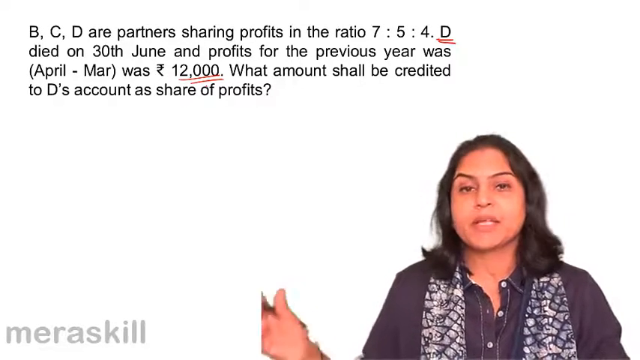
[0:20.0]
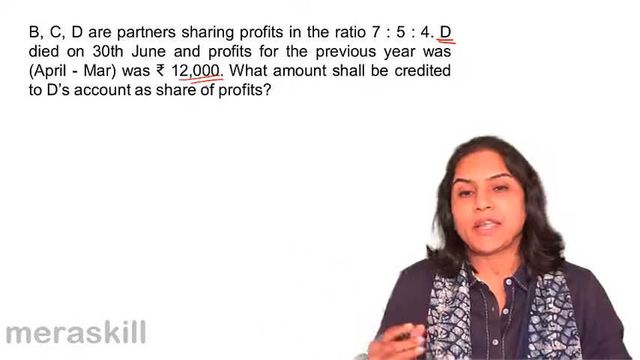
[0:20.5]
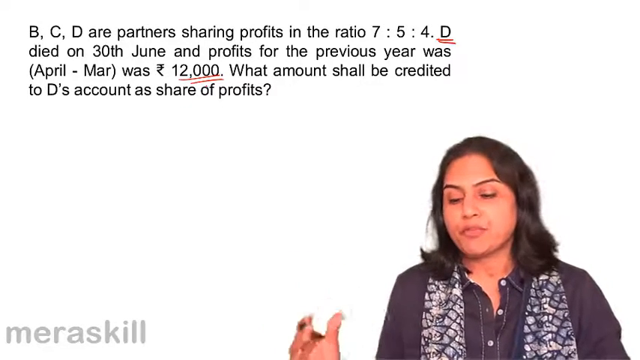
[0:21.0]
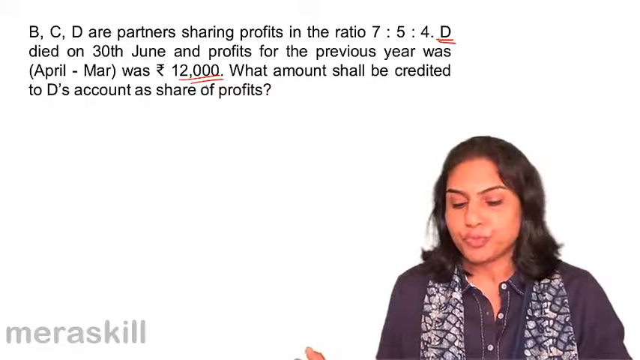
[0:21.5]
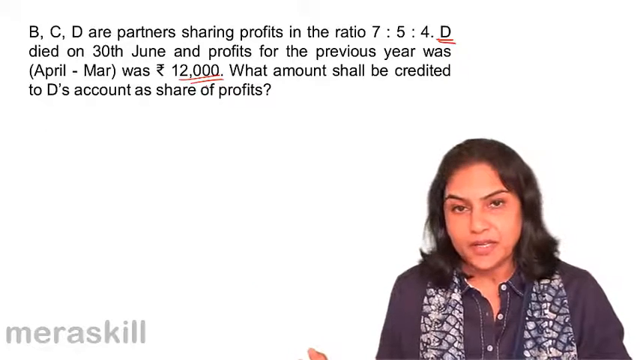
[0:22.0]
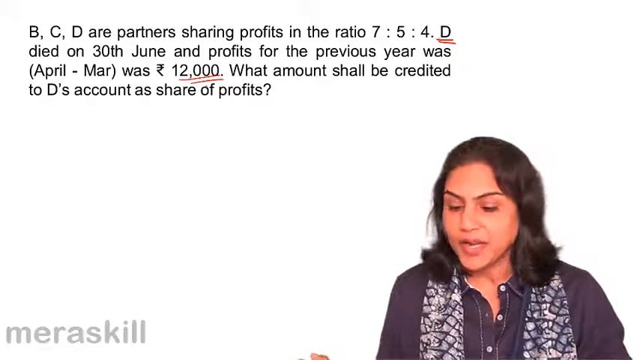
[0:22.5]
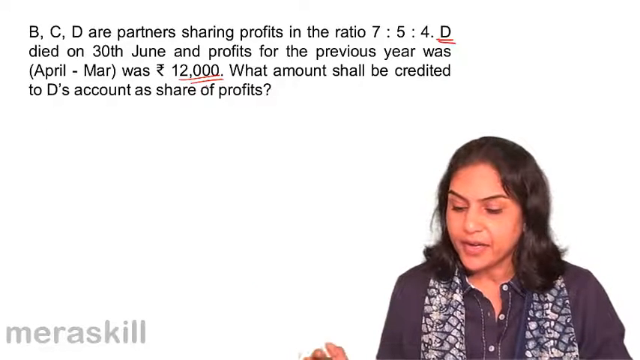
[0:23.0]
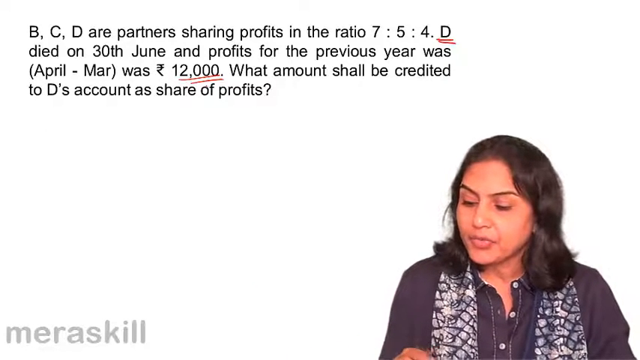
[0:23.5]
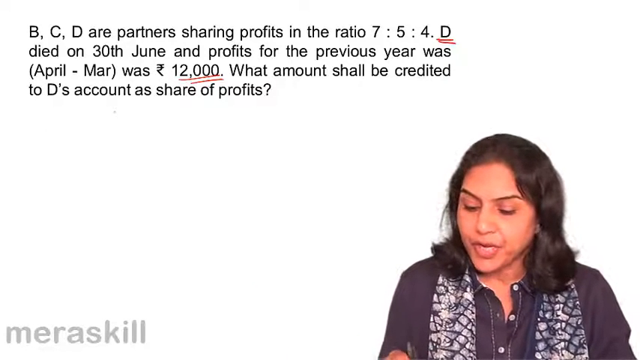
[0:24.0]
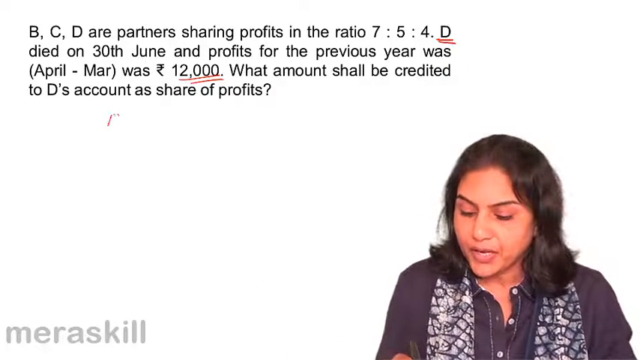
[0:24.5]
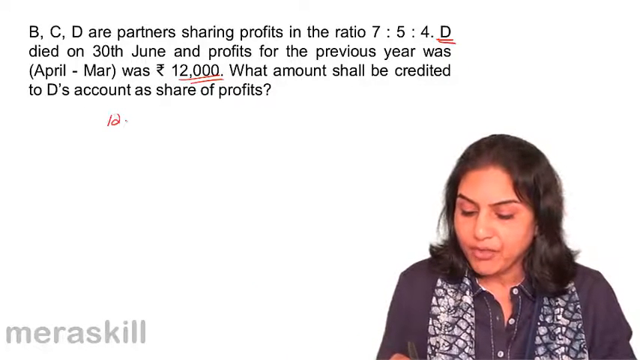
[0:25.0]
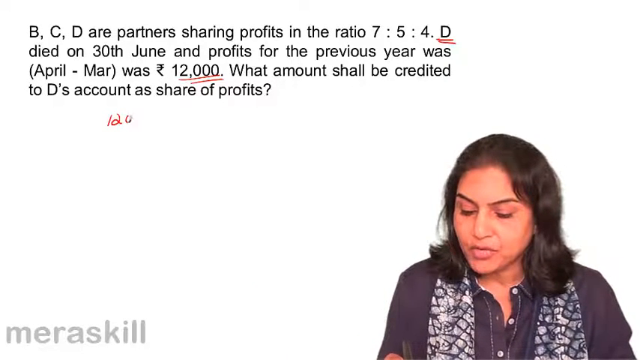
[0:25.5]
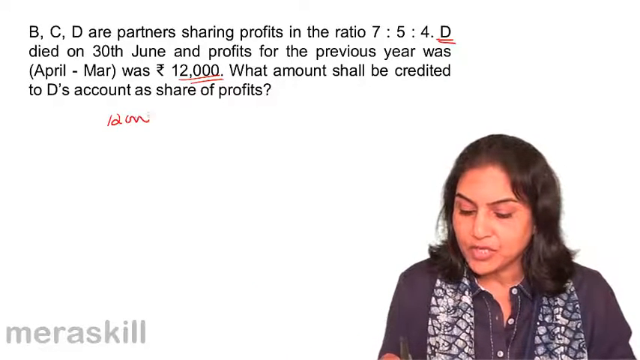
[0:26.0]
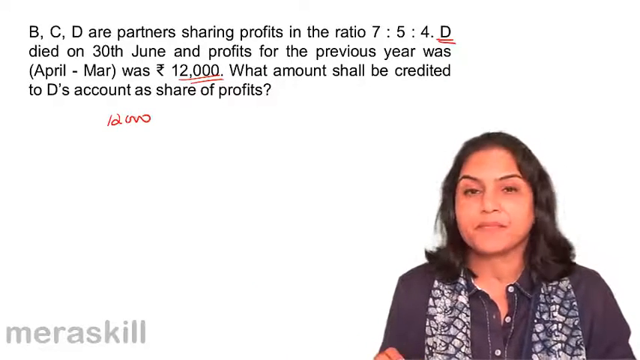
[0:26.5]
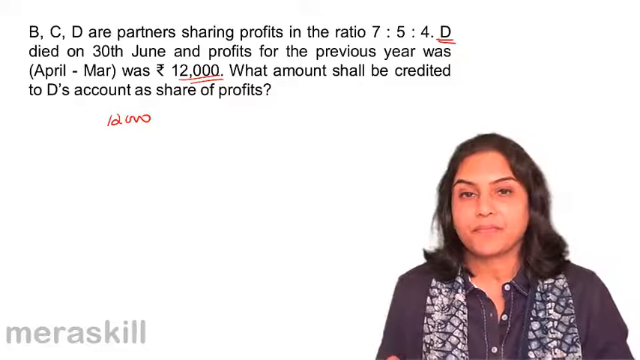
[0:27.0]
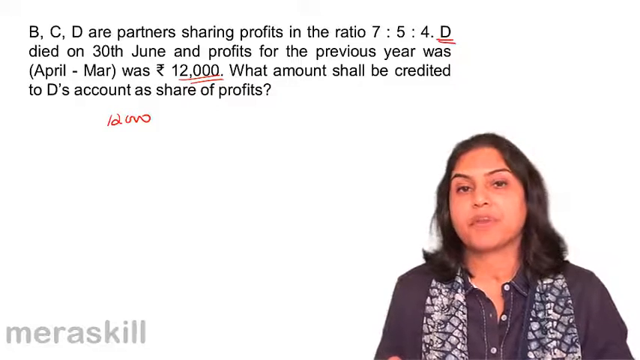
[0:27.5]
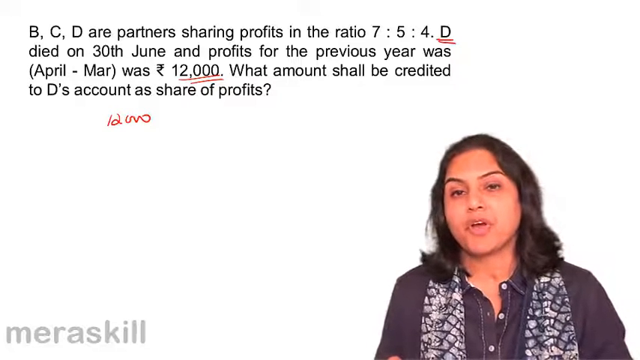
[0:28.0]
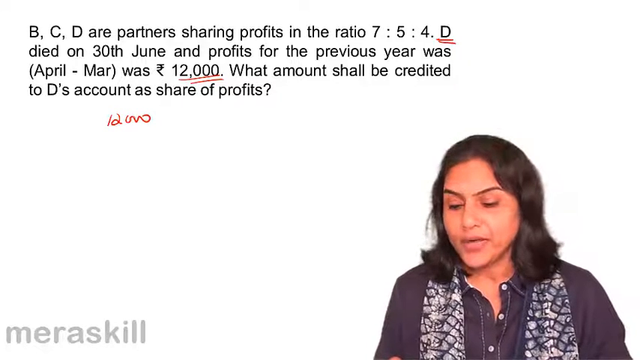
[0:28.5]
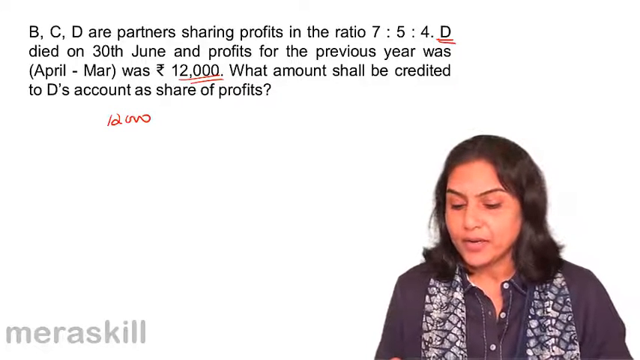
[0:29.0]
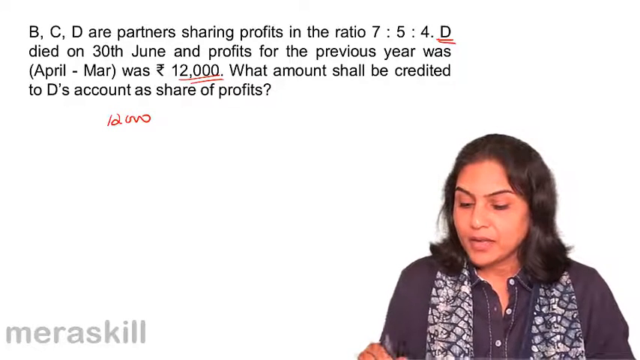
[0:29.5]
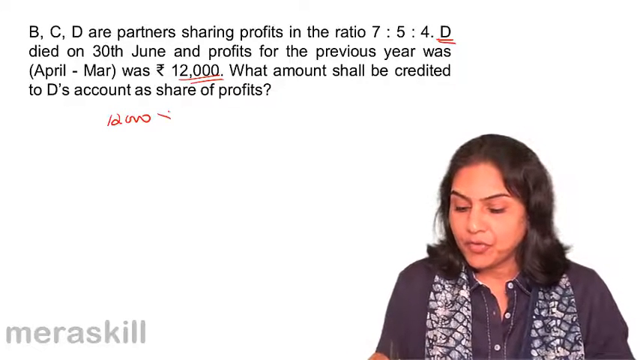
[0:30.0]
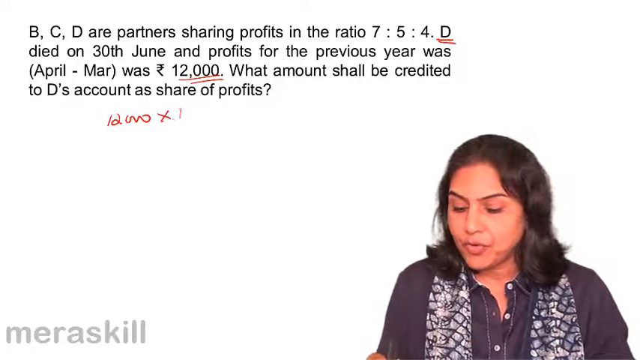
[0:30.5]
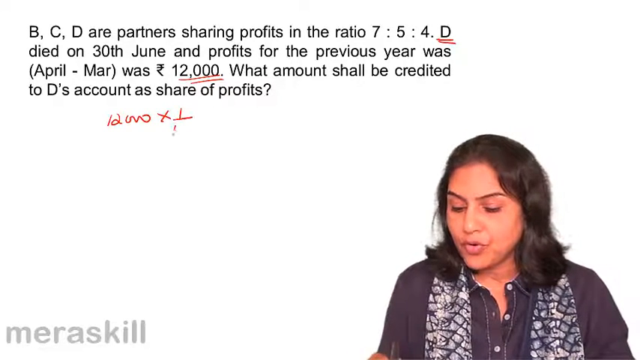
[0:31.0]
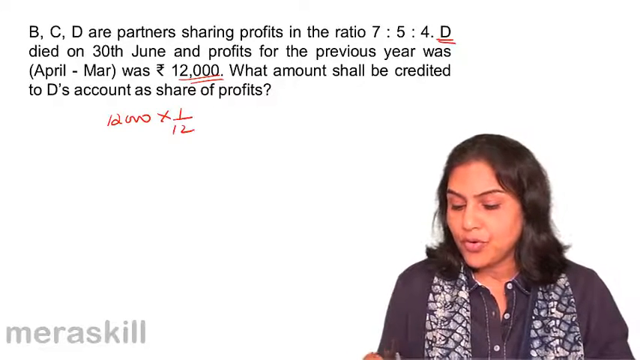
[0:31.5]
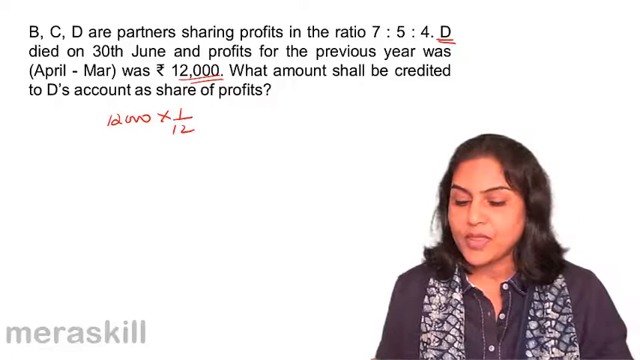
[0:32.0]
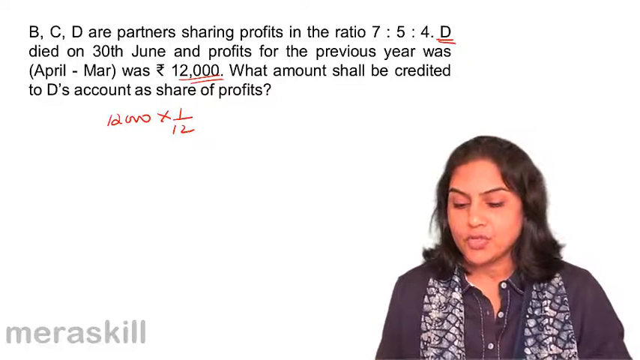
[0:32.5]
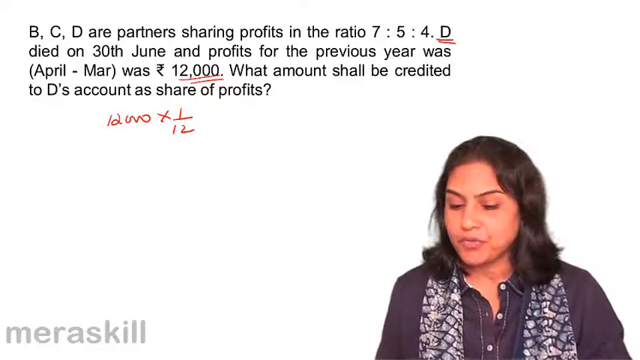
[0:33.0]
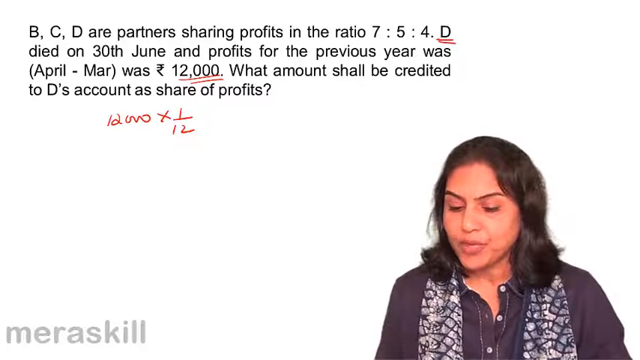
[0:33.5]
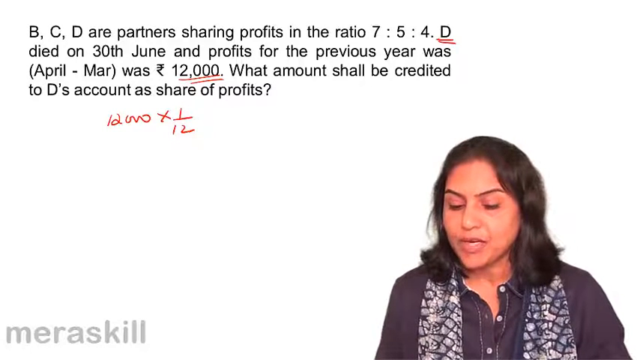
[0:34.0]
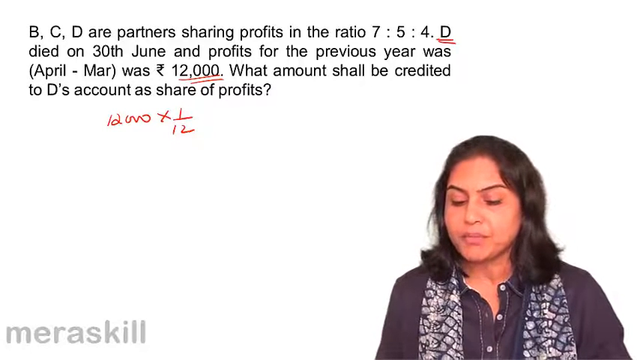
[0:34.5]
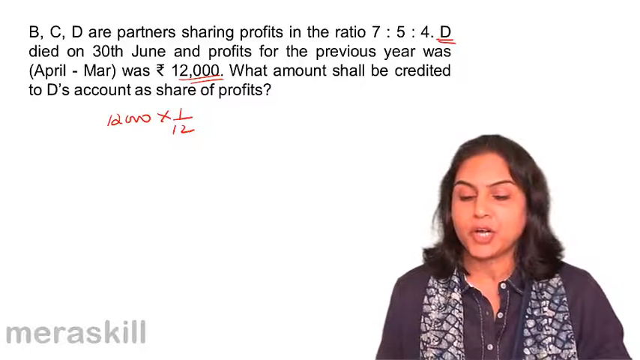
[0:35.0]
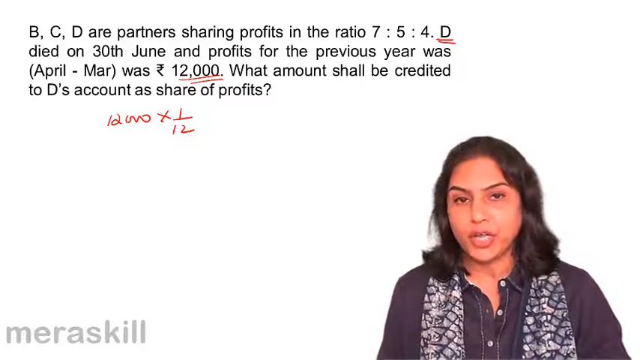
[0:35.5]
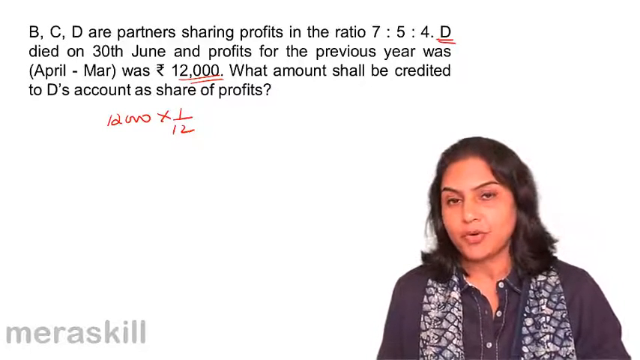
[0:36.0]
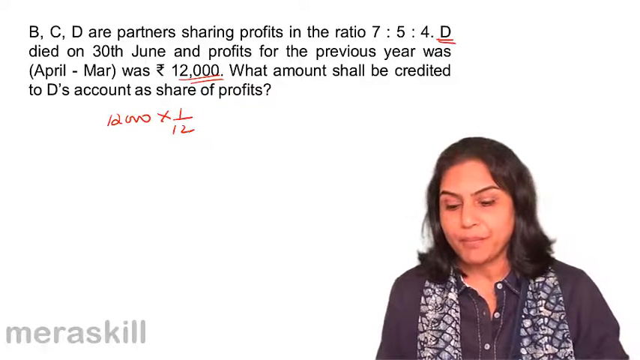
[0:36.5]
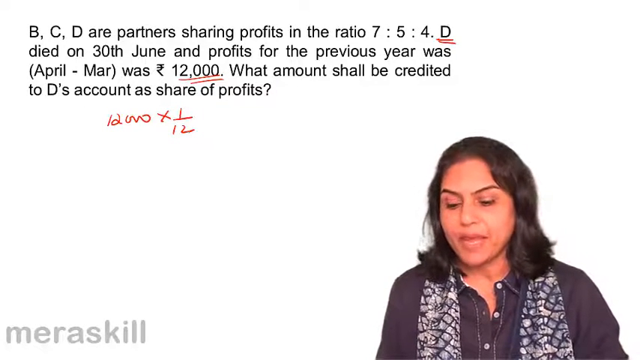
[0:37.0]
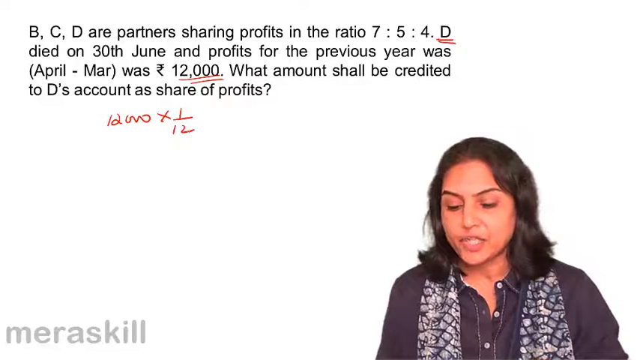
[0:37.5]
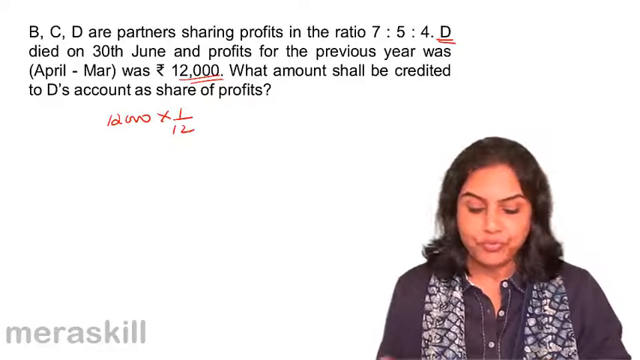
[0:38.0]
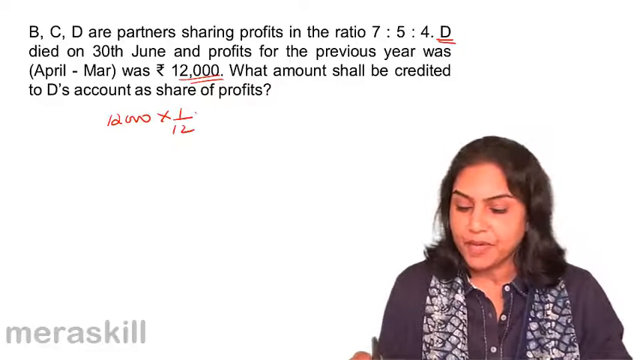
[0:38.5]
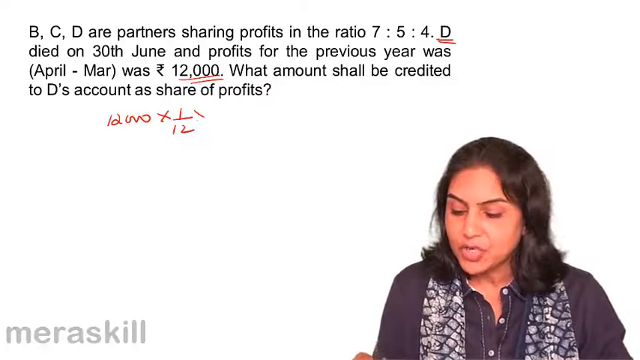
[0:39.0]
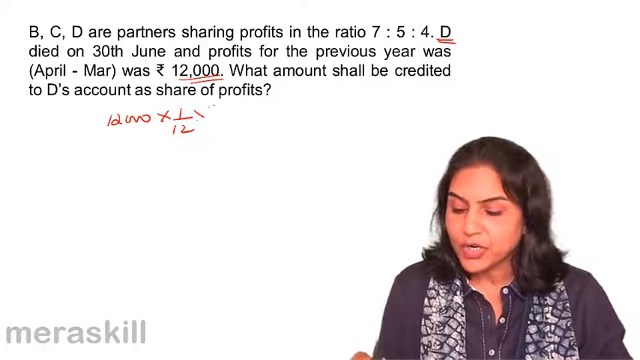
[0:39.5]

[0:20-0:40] The question remains on screen: "B, C, D are partners sharing profits in the ratio 7-5-4. D died on 30th June and profits for the previous year was April through March was $12,000. What amount shall be credited to D's account as share of profits?" The woman speaks, apparently giving some type of presentation, and writes as she speaks; her writing appears on the screen as she goes. She looks up while talking. She writes 12,000, which appears on the screen, and then writes 12,000 times the fraction 1/12.